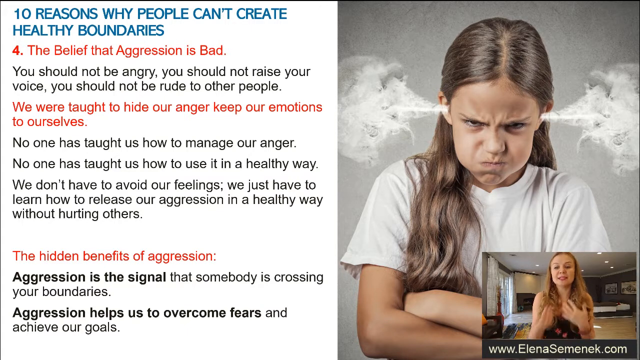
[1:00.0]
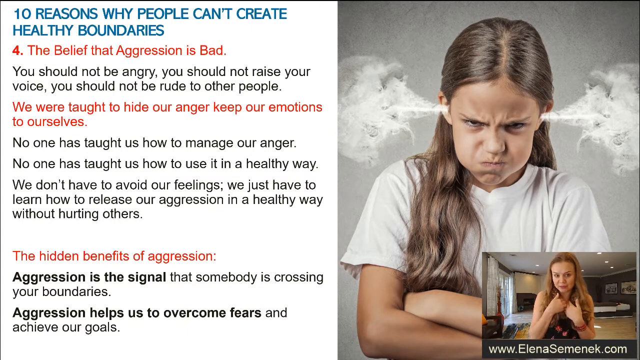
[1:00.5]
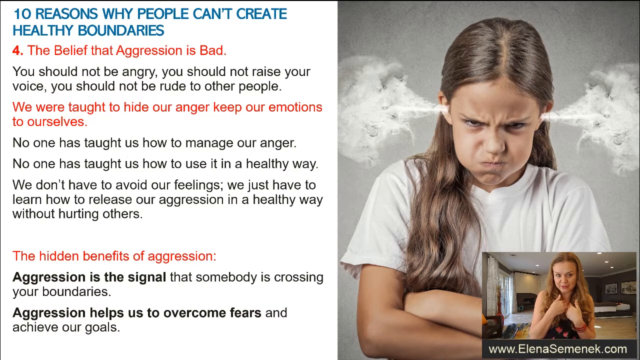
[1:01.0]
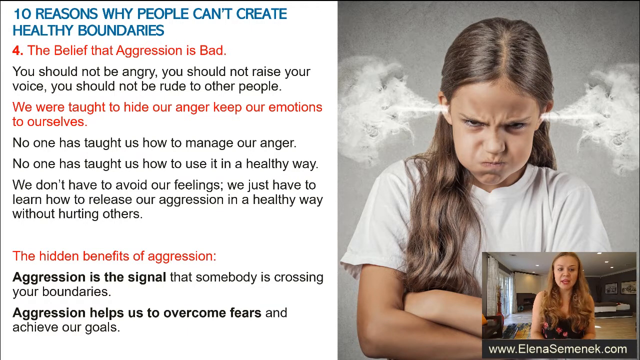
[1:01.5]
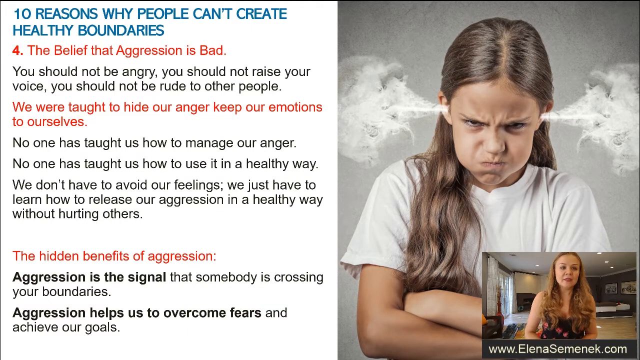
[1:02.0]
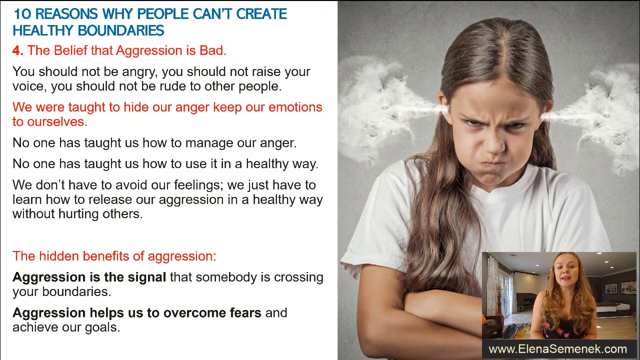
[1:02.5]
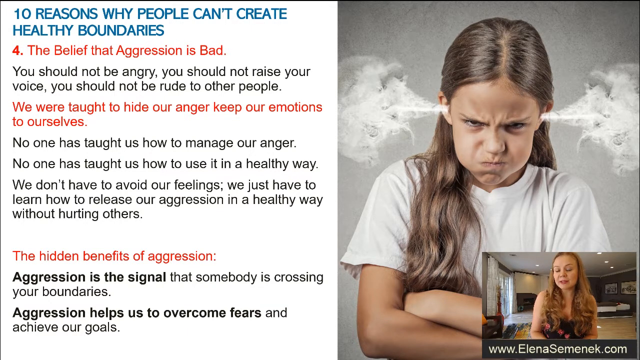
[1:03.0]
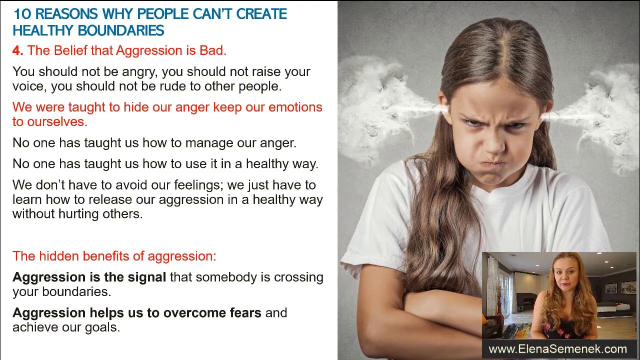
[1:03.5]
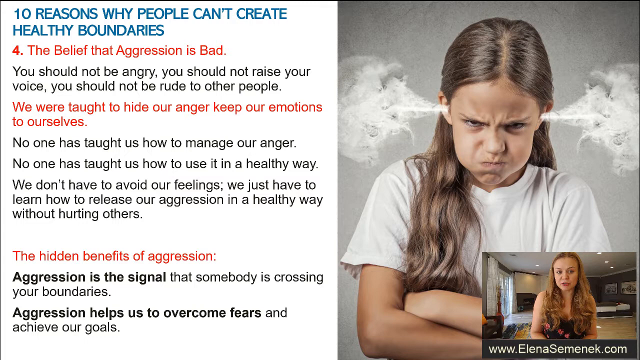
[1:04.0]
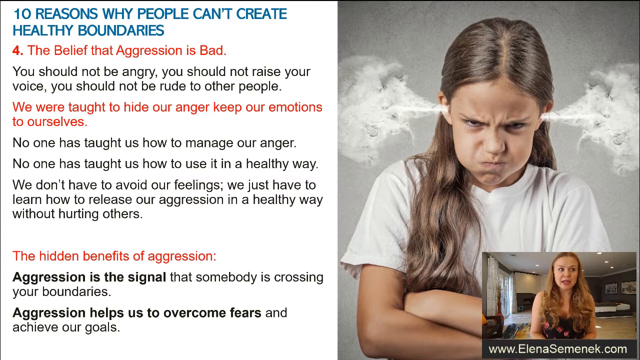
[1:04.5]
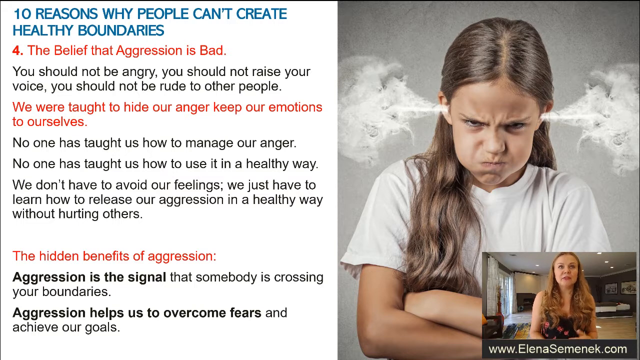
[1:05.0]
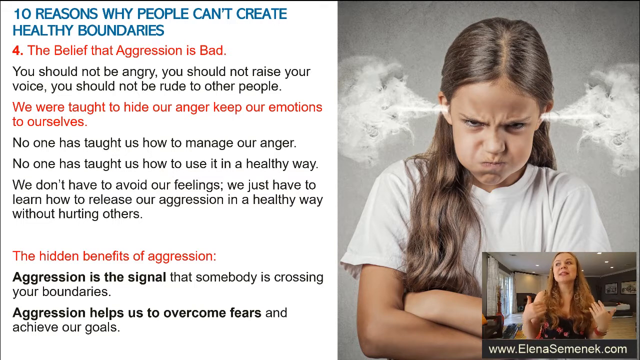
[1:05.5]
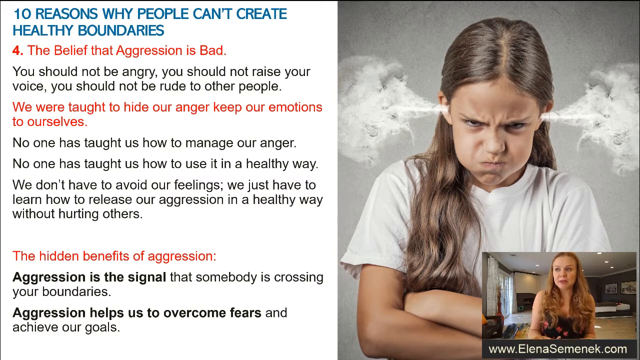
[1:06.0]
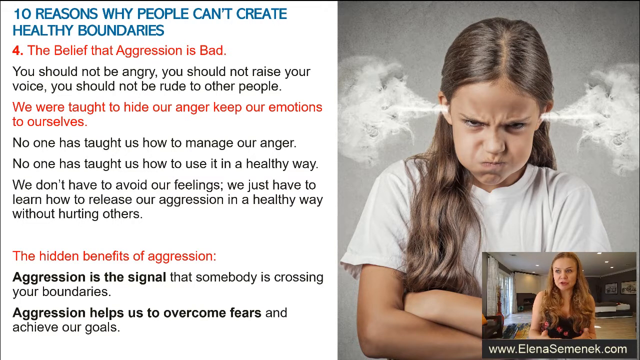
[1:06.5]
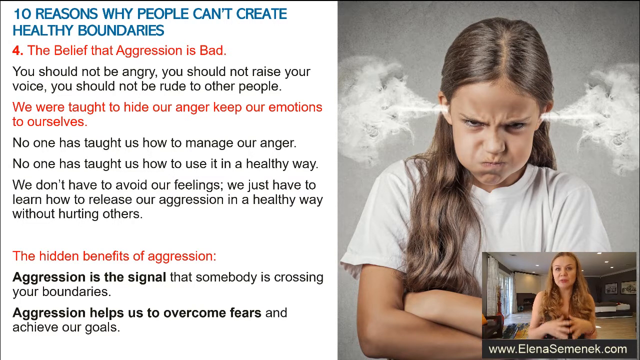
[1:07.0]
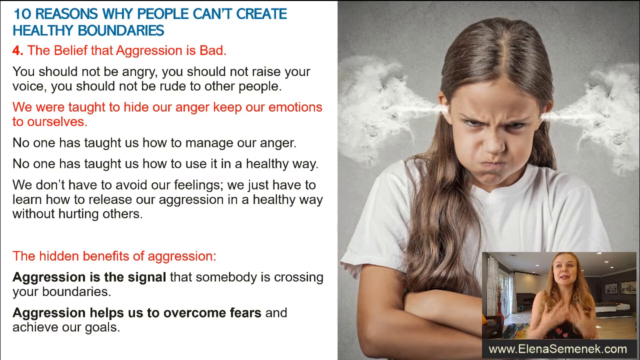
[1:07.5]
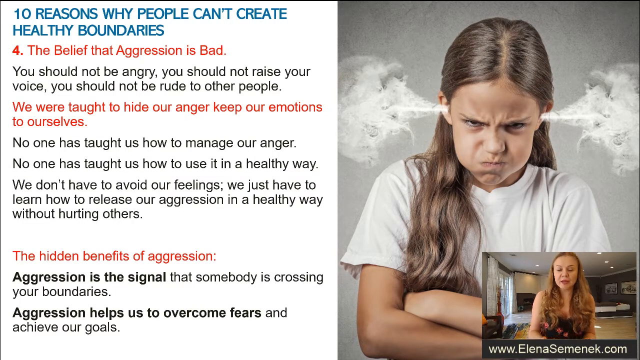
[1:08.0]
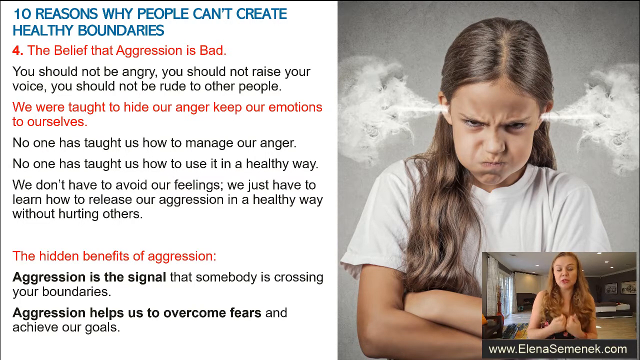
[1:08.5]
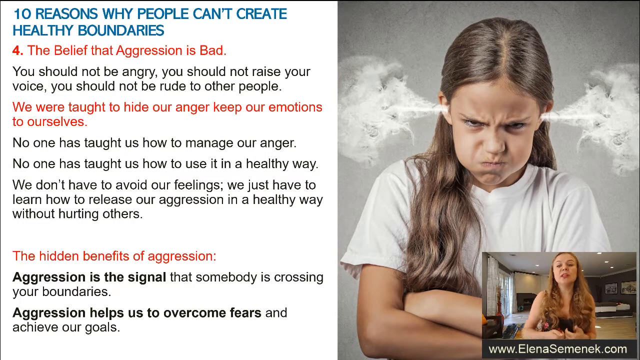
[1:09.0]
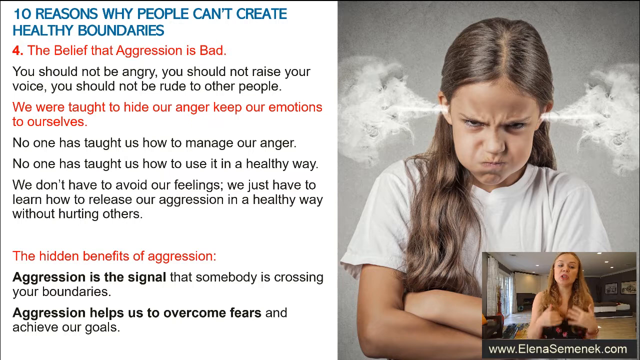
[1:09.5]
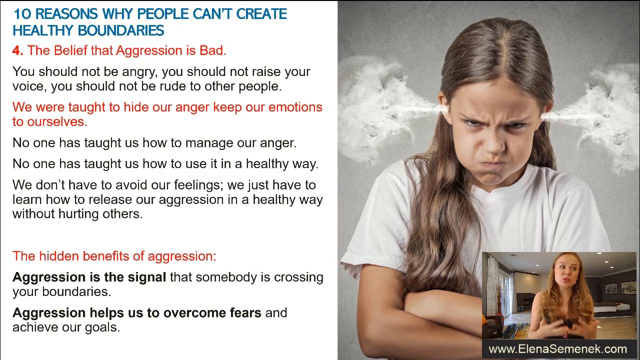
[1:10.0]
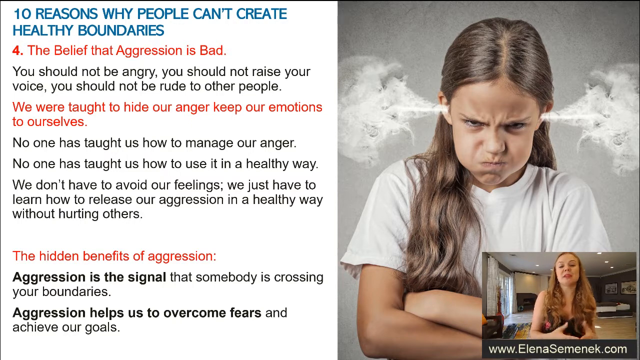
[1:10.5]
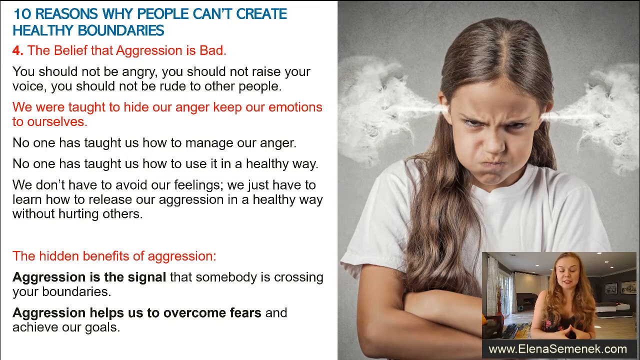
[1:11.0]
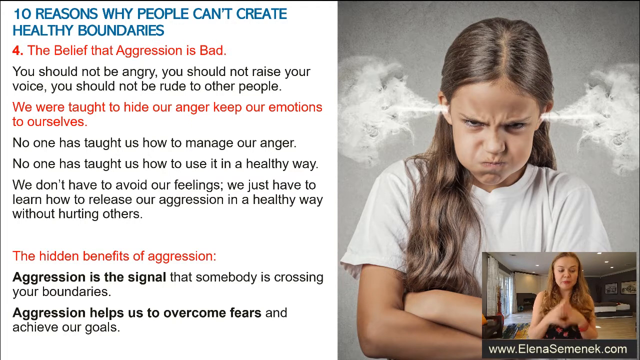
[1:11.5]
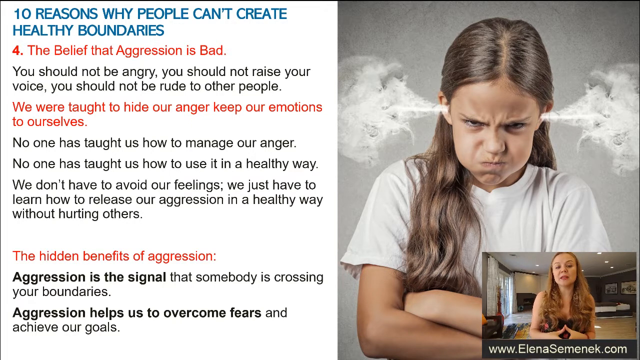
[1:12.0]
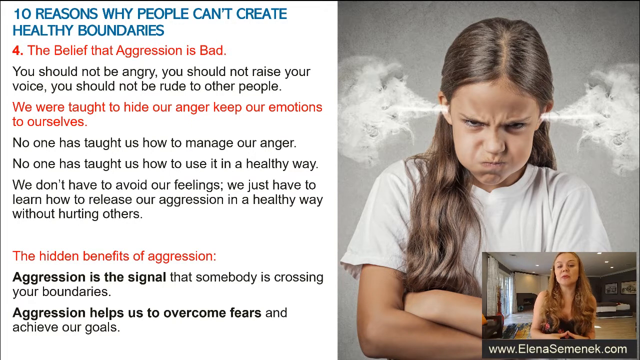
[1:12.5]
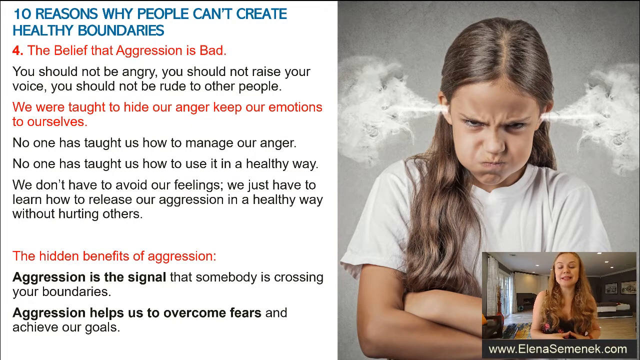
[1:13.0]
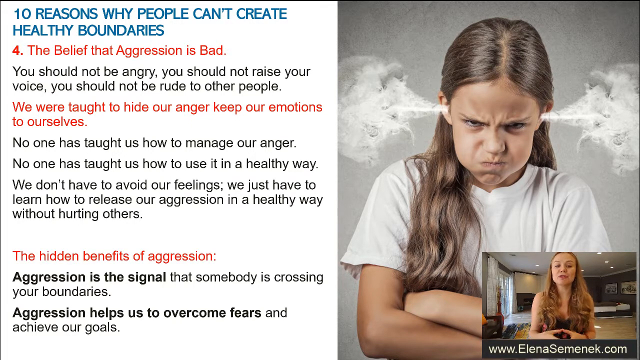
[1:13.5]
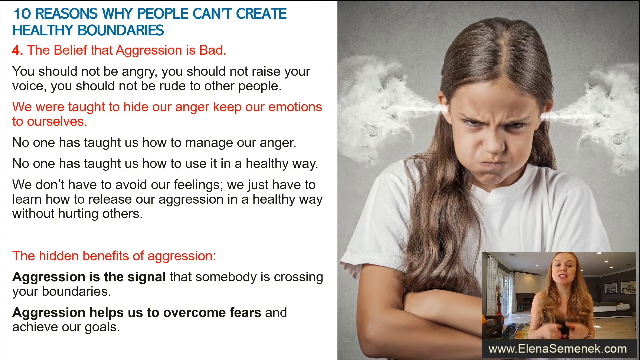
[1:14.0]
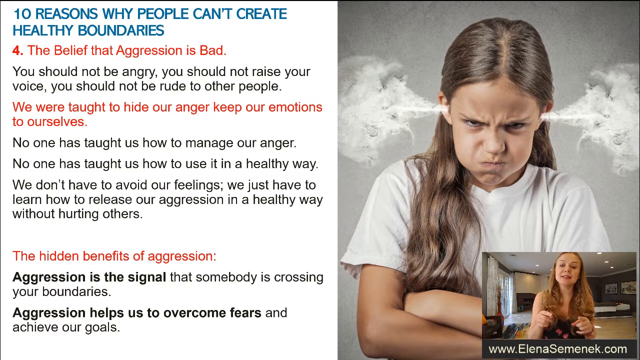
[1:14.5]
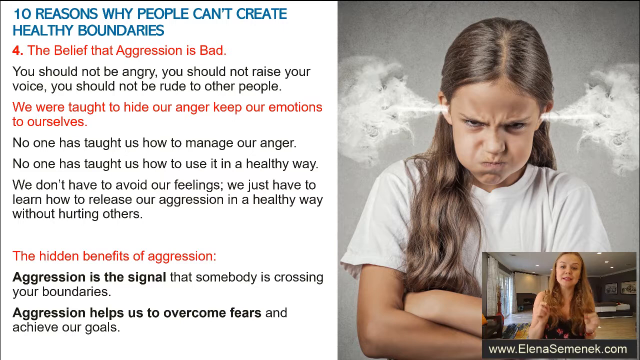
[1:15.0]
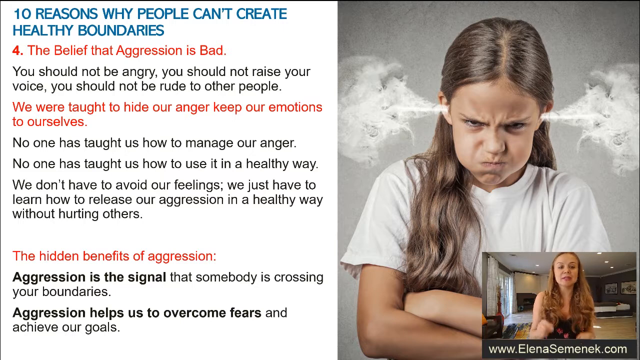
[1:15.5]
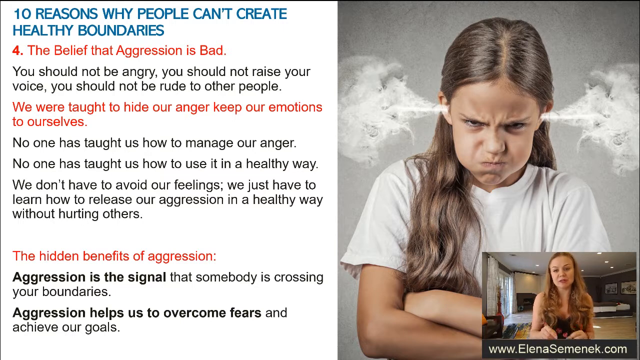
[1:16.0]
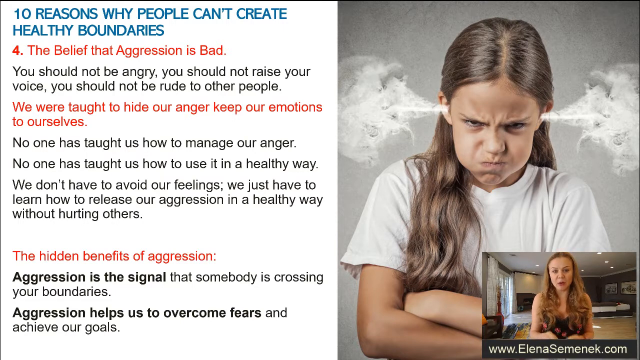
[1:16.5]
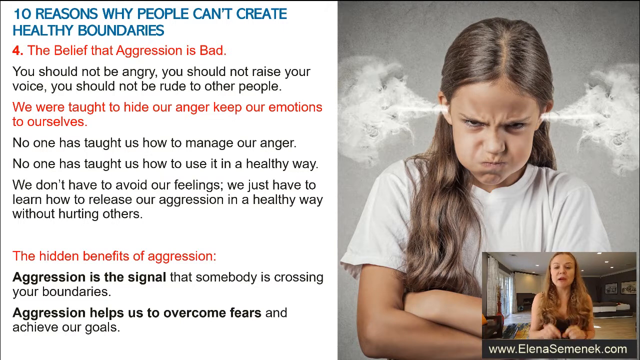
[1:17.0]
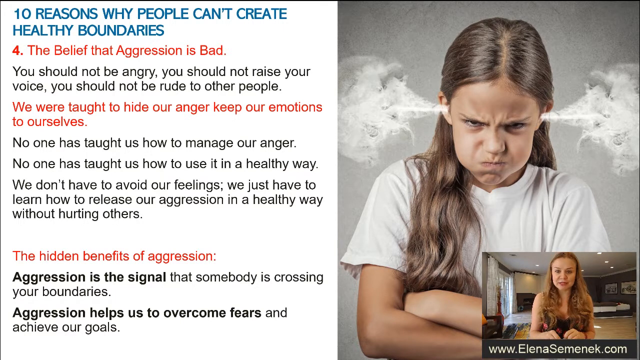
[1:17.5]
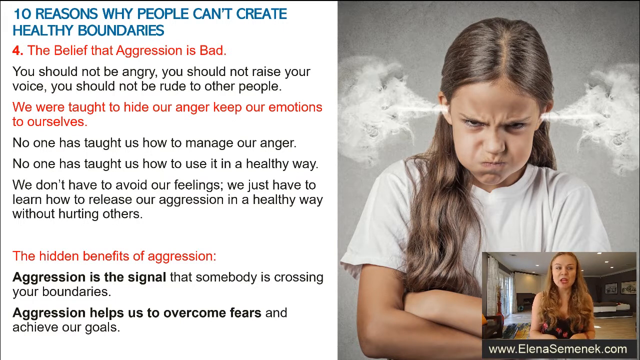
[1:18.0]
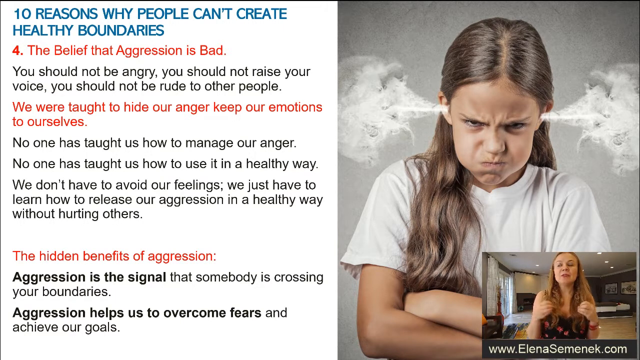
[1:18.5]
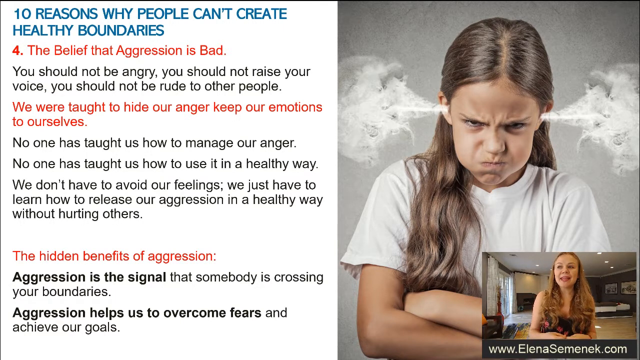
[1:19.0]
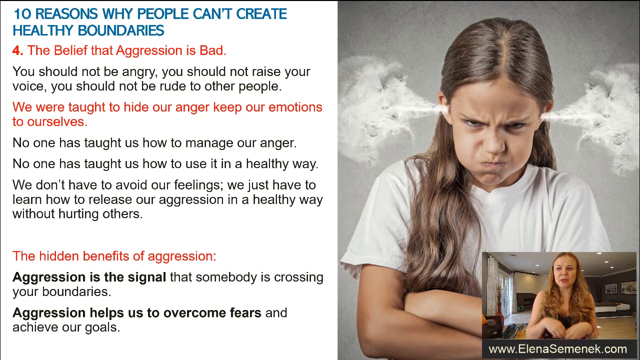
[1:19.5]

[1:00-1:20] On the left-hand side of the screen is the text "10 reasons why people can't create healthy boundaries" in blue font, with three headings below it, all in red: "4. The belief that aggression is bad", "We were taught to hide our anger, keep our emotions to ourselves", and "The hidden benefits of aggression". On the right-hand side is an image of an angry young girl with brown hair in a centre parting and steam coming out of her ears. Her arms are folded and she wears a white t-shirt. In the bottom right corner a woman with long brown hair narrates the video, gesticulating with her hands. Mostly both hands move in the same way, with a little pointing down as the video goes on; overall the hands suggest she is explaining something.